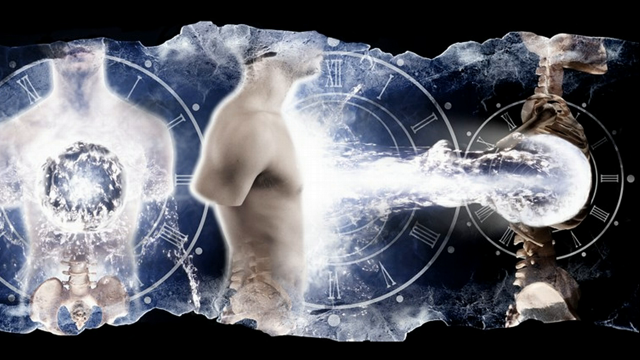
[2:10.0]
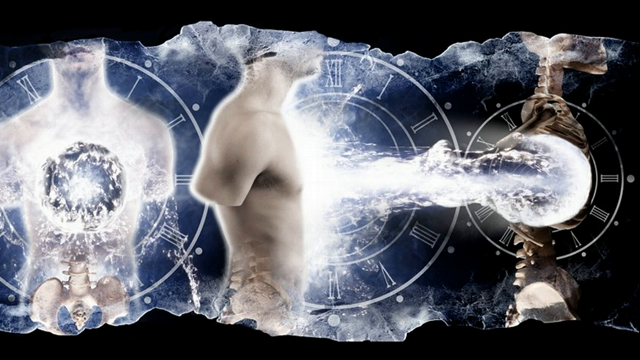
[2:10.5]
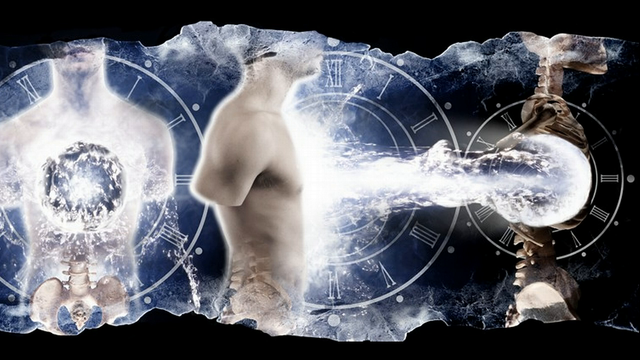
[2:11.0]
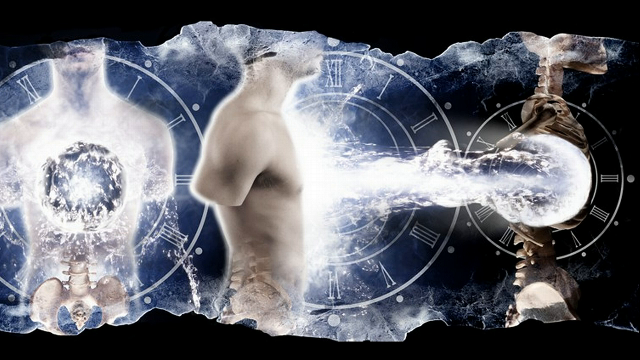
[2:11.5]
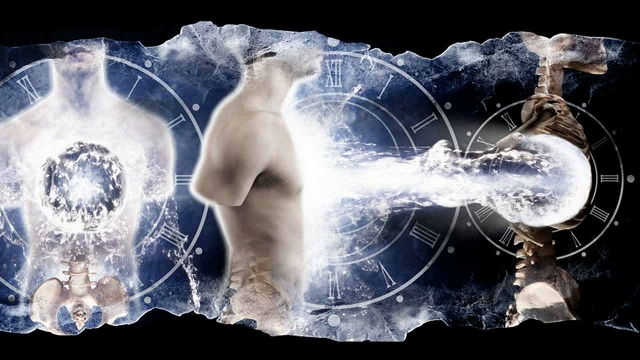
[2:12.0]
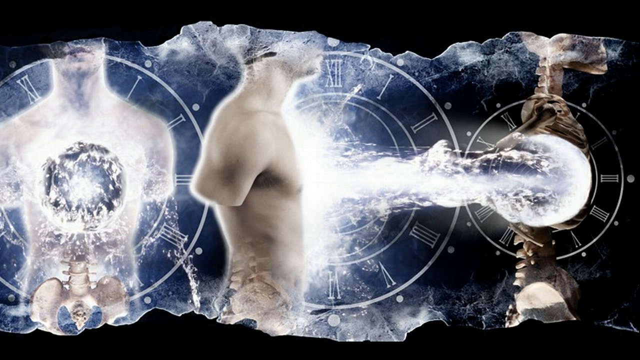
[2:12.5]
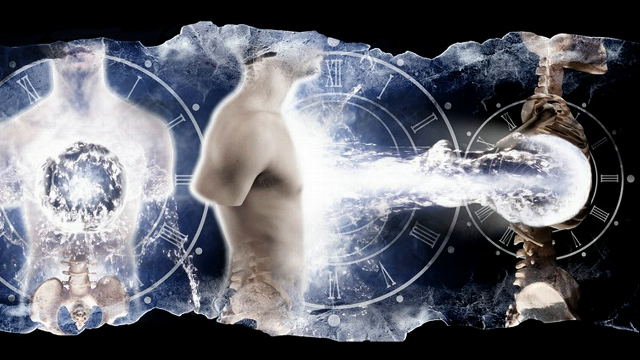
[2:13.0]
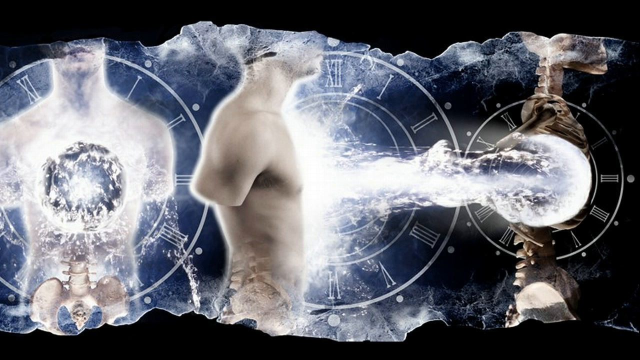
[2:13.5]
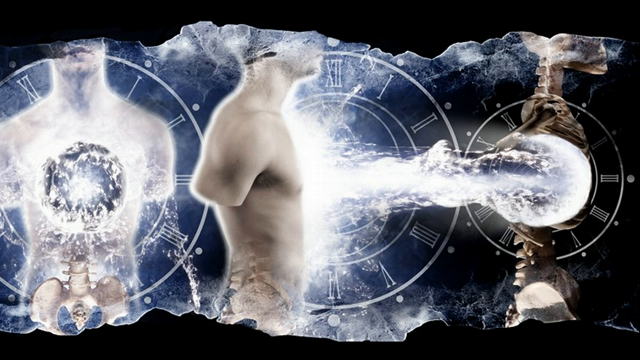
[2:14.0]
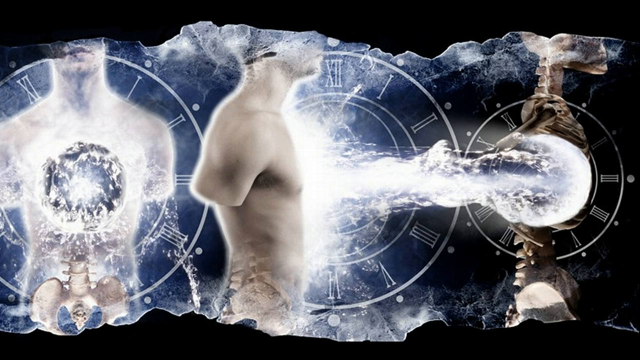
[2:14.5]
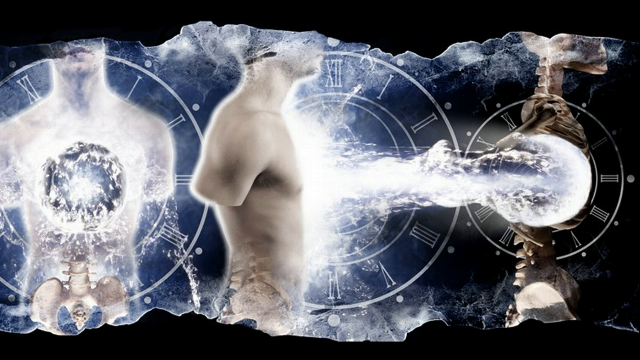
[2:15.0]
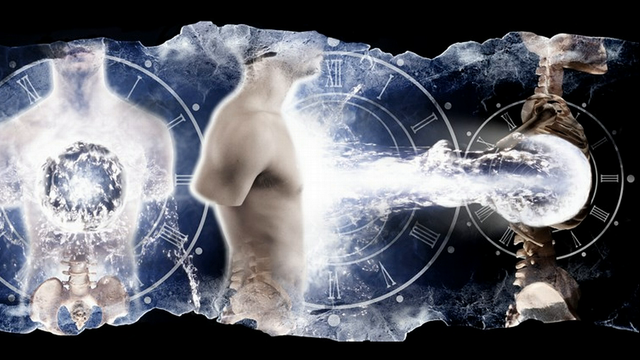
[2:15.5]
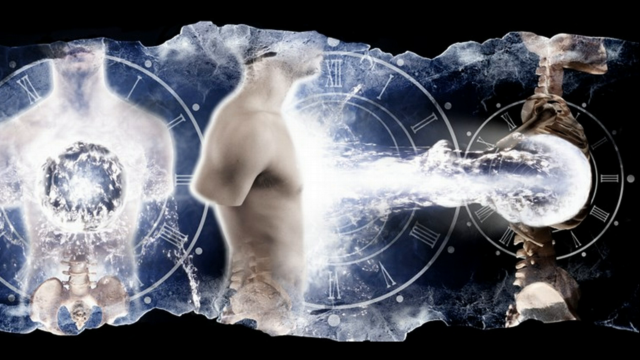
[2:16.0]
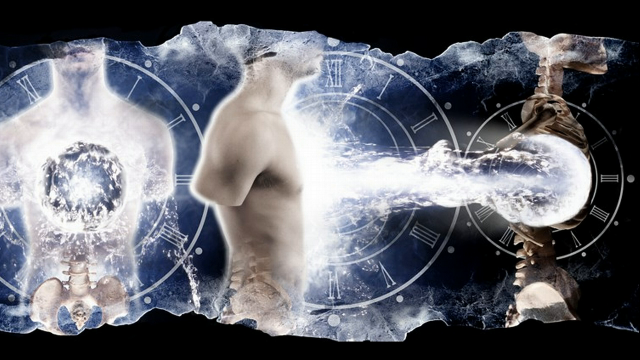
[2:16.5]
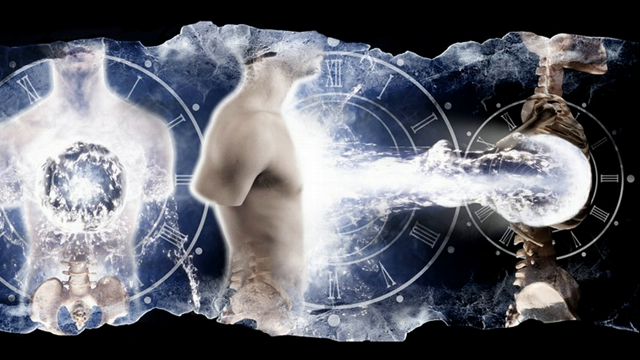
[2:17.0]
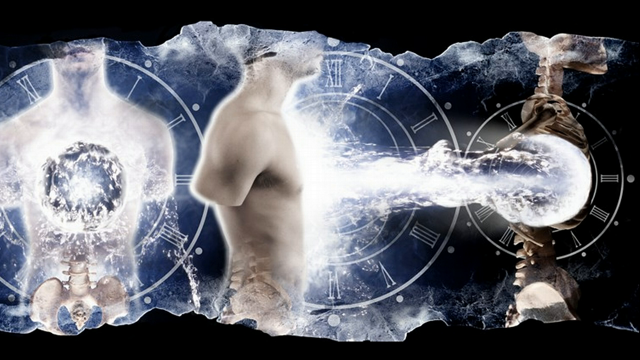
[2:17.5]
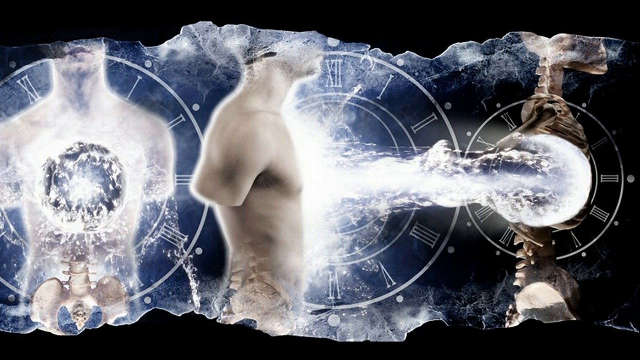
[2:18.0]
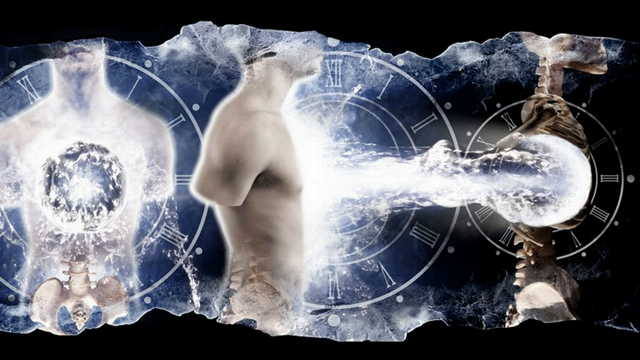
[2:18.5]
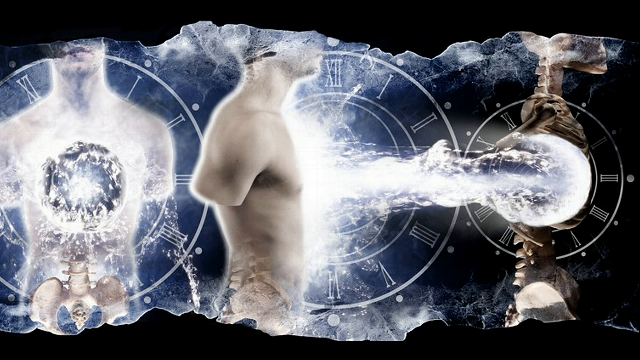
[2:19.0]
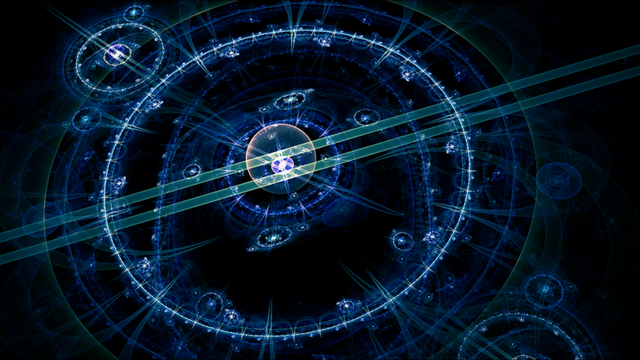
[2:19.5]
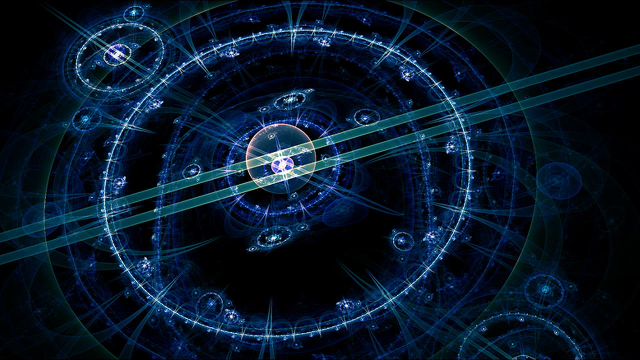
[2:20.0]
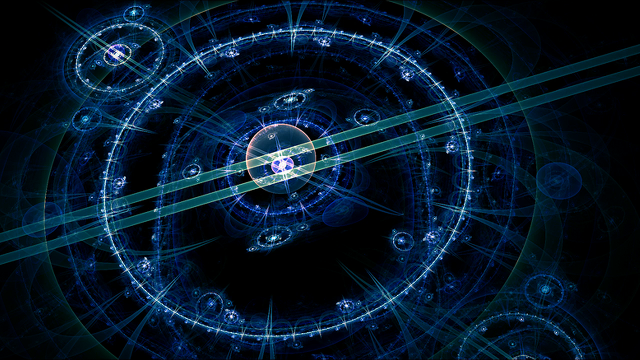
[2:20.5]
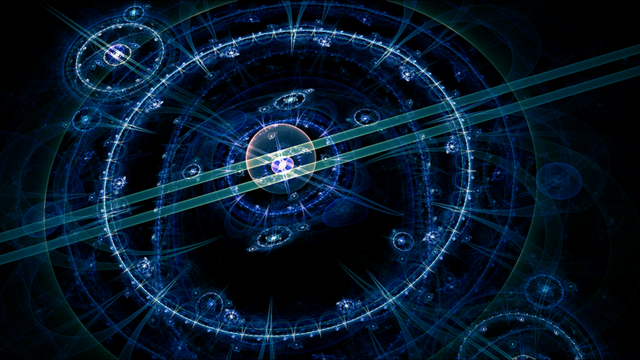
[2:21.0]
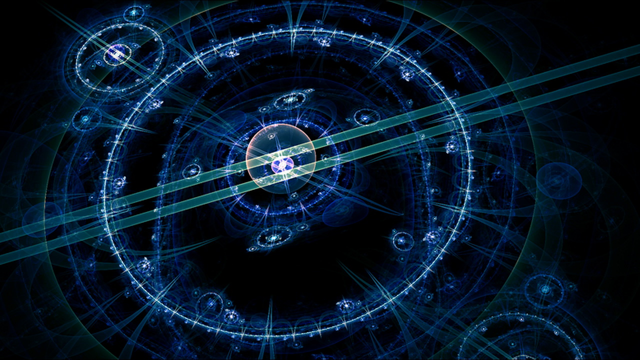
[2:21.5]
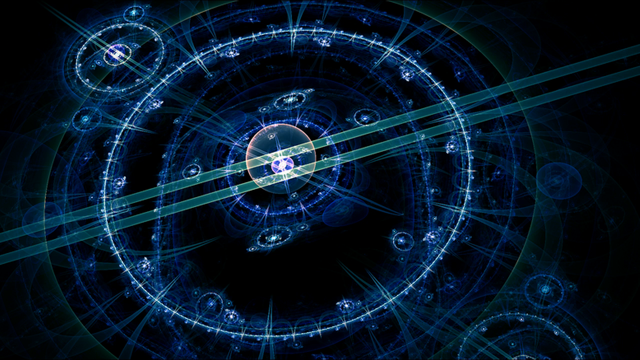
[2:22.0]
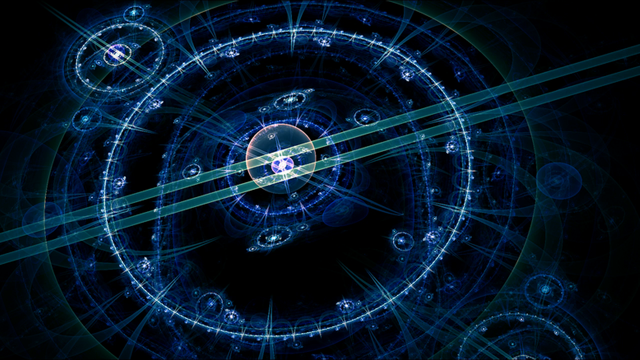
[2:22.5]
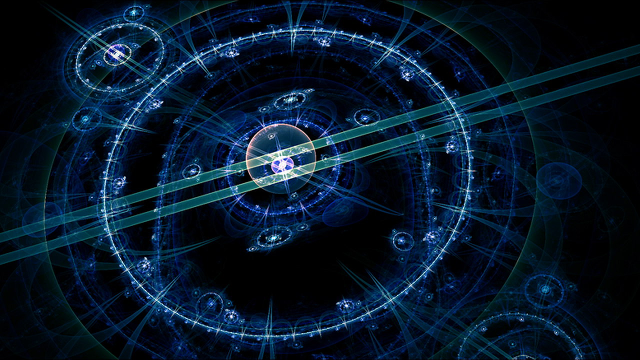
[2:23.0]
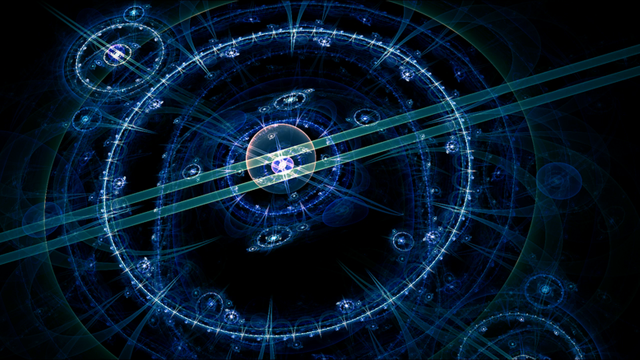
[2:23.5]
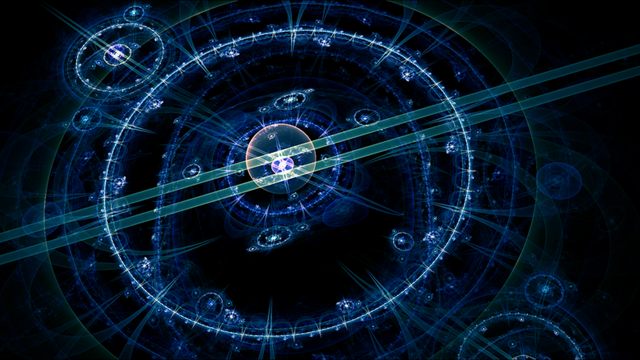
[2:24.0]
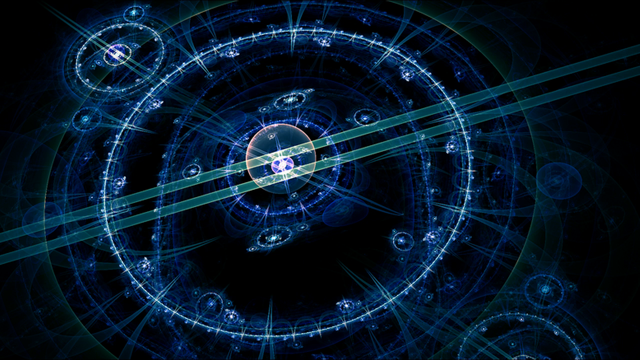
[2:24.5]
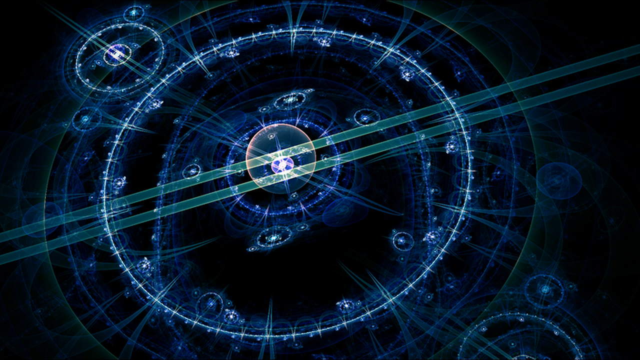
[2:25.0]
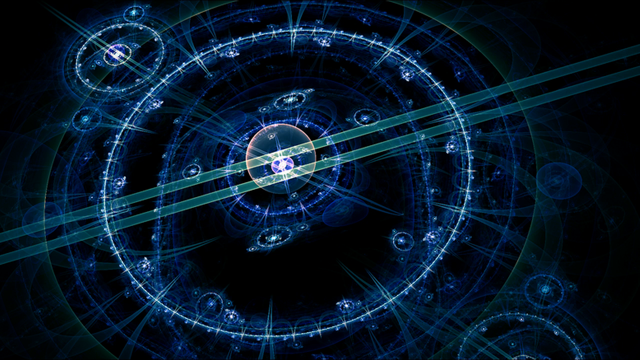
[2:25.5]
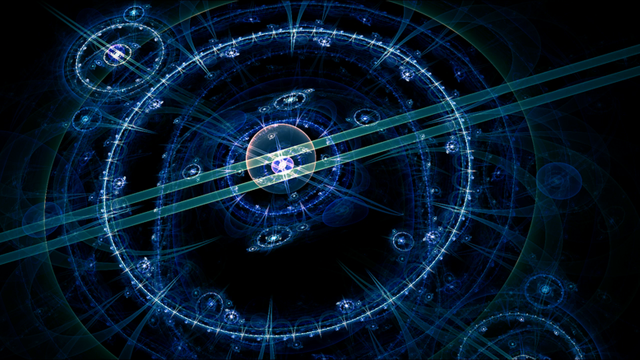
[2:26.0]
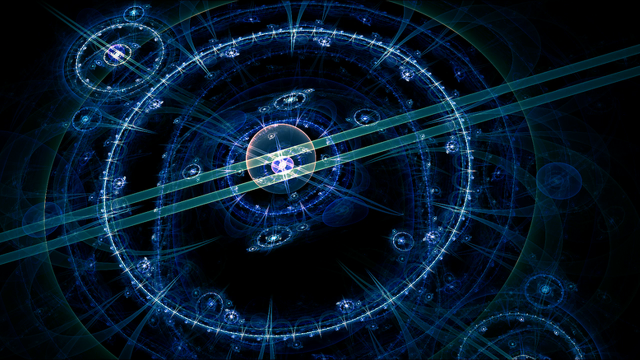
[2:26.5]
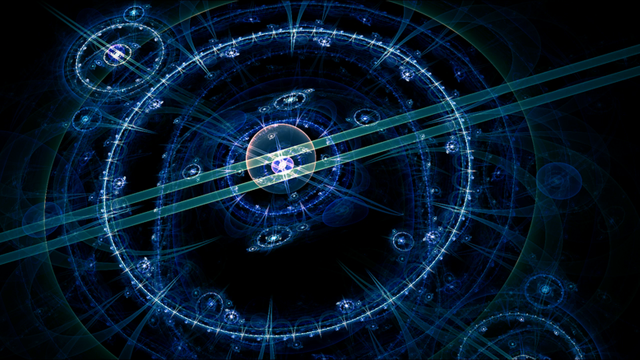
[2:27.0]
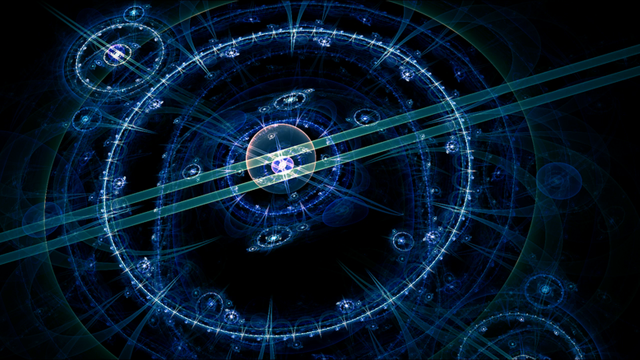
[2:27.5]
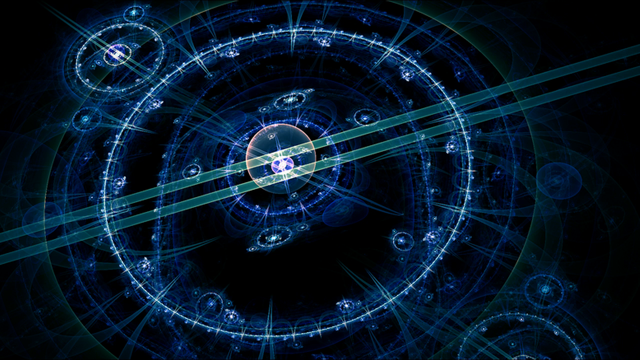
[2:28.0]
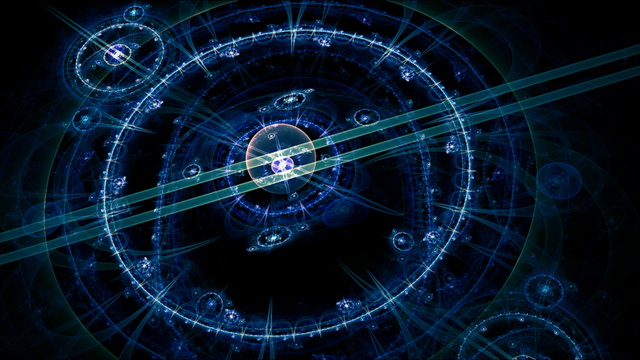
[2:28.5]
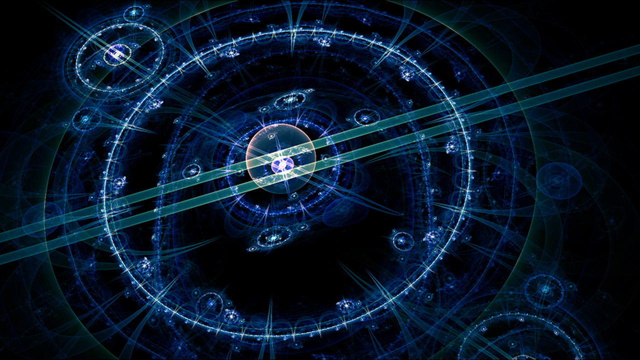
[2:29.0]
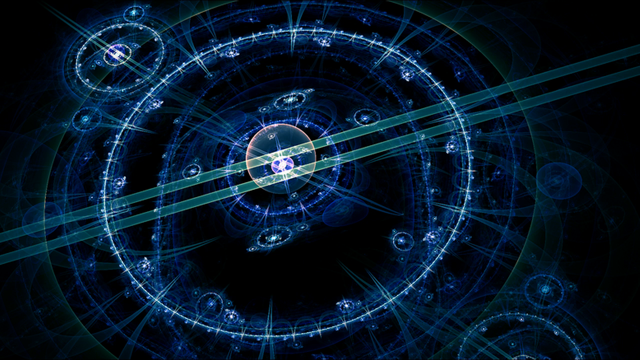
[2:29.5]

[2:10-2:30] The image continues, showing a projectile leaving the human and going across to another skeleton, apparently the human soul reaching across to its future body. Afterward, an unclear image appears that looks like a pendulum or a clock. It has orbs in the middle, possibly where a person transports across time, and many little circles, possibly representing future or past dimensions. The colors are blue, green and white, and different little rings run across the image, possibly indicating how far back and forward one goes.